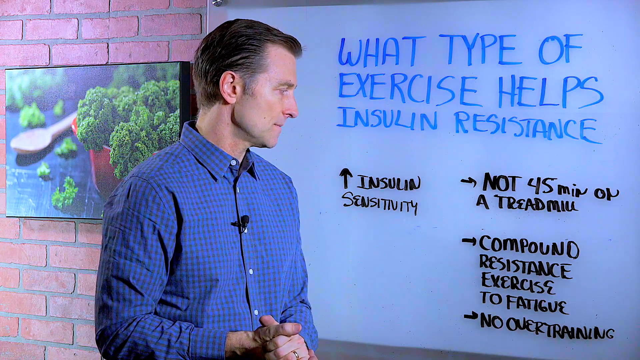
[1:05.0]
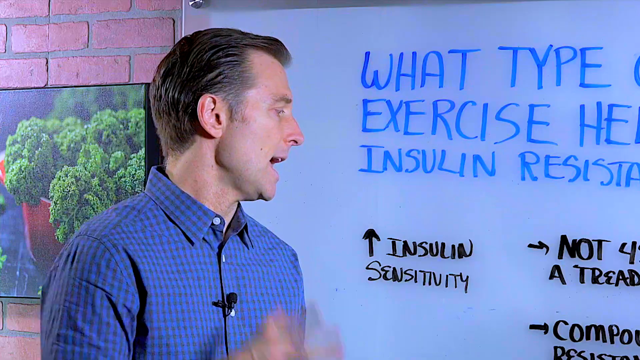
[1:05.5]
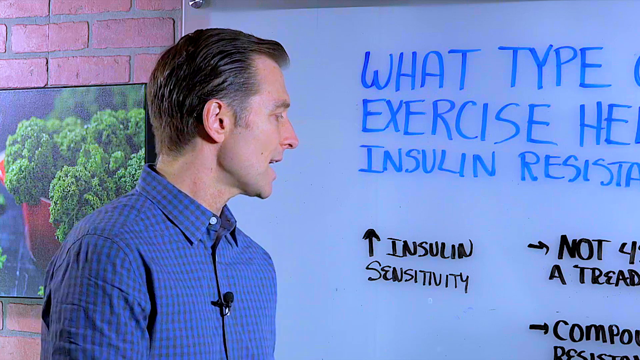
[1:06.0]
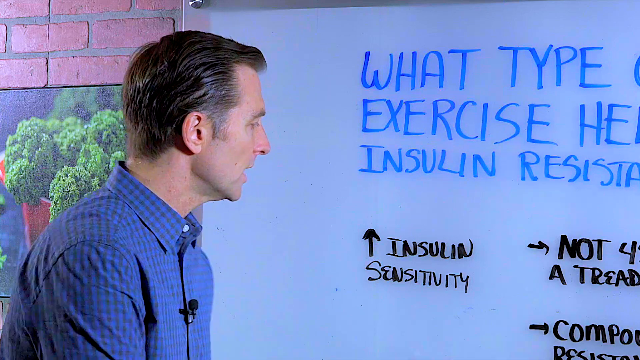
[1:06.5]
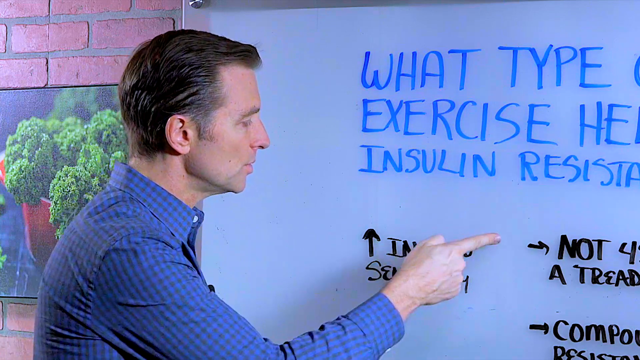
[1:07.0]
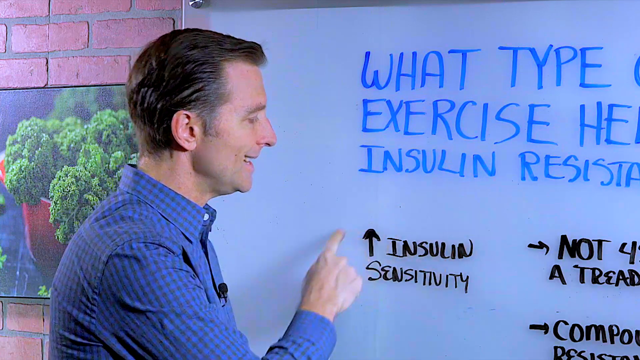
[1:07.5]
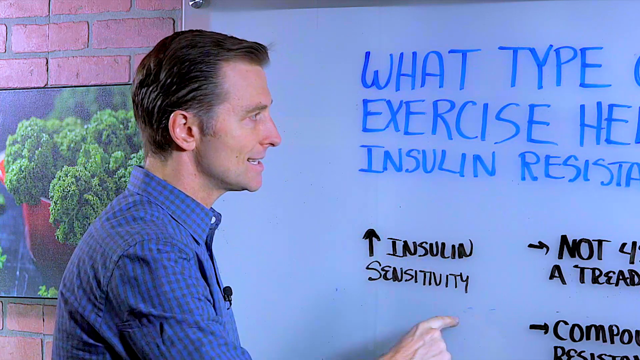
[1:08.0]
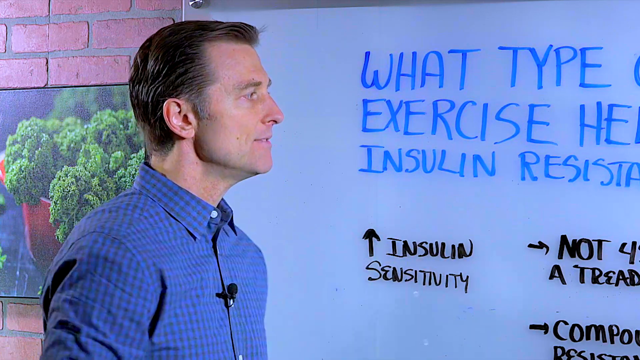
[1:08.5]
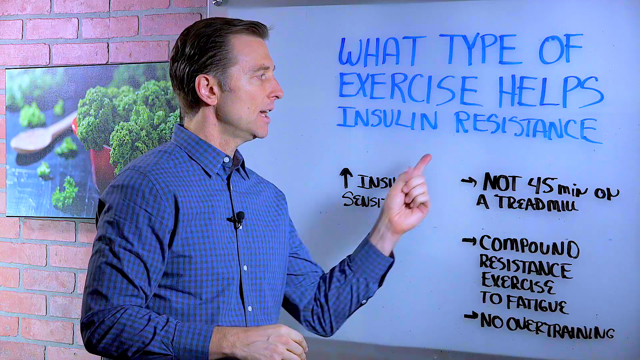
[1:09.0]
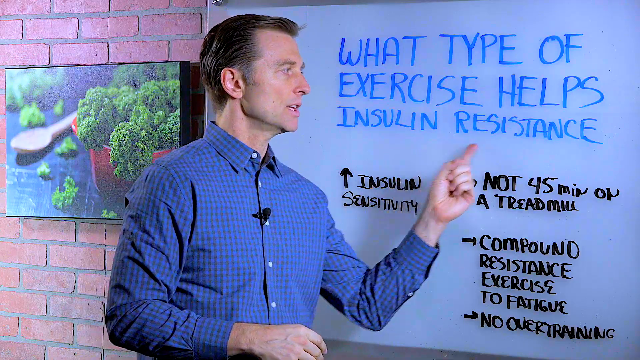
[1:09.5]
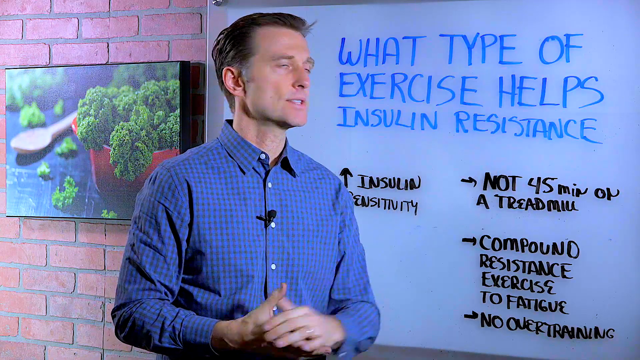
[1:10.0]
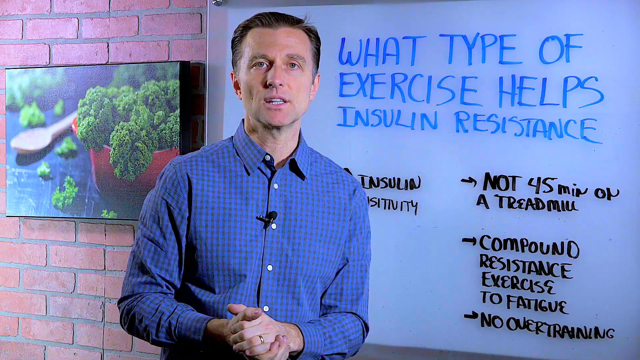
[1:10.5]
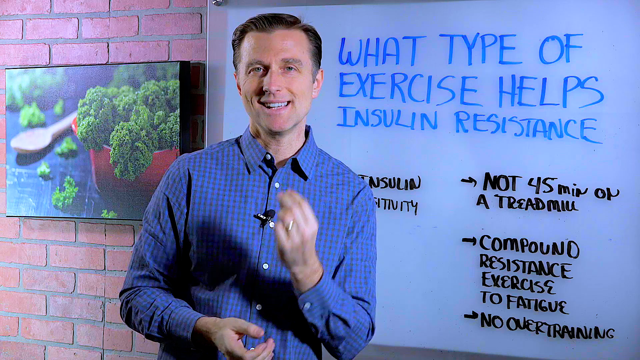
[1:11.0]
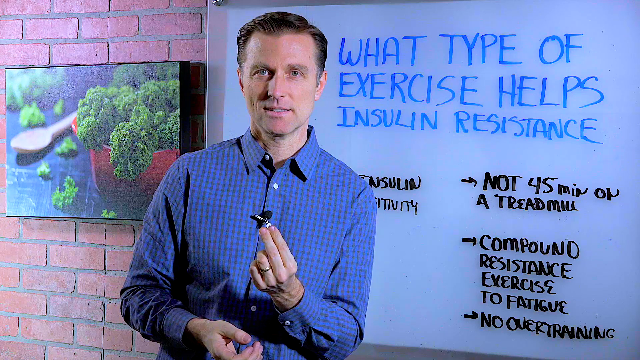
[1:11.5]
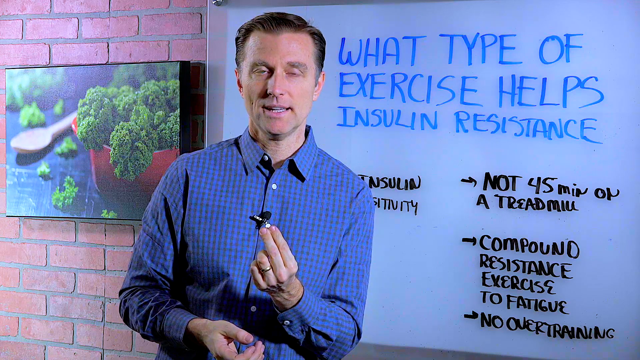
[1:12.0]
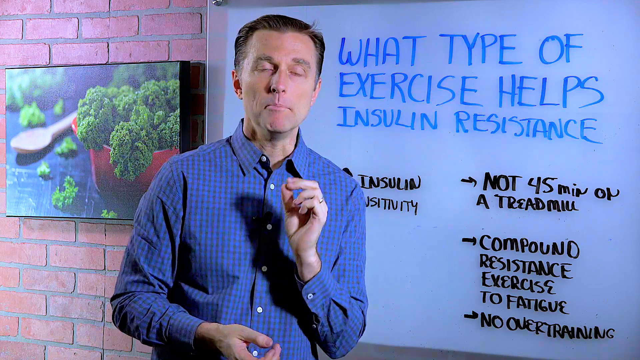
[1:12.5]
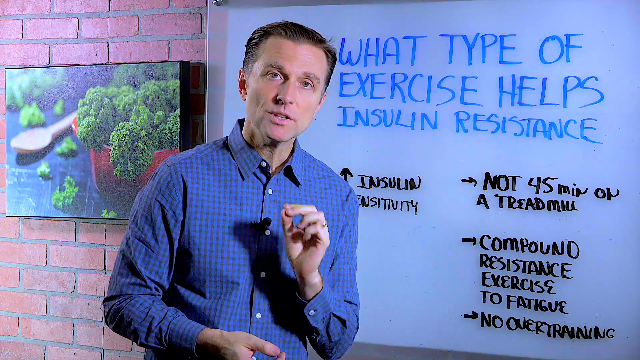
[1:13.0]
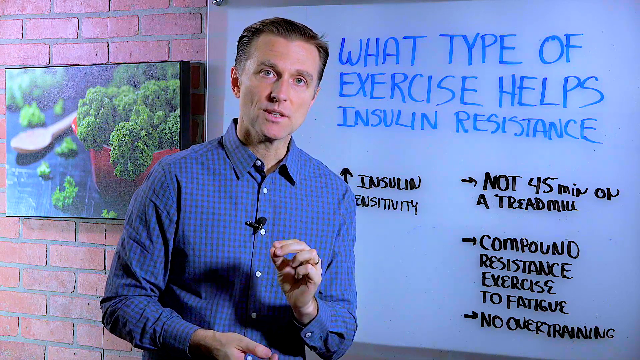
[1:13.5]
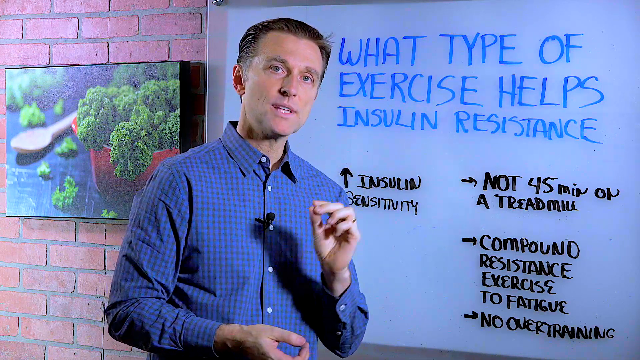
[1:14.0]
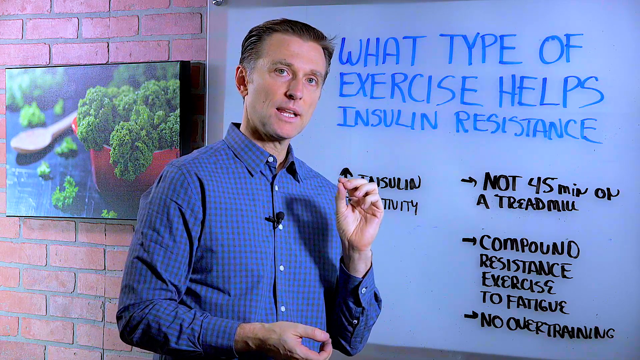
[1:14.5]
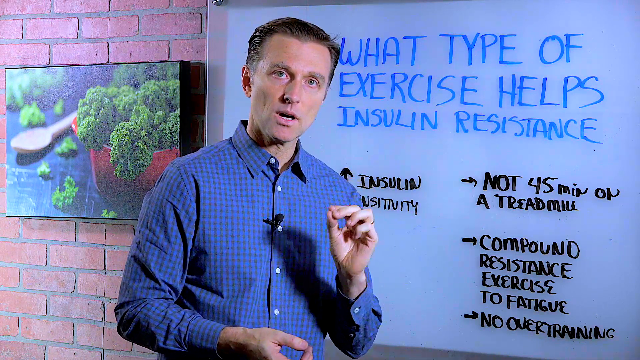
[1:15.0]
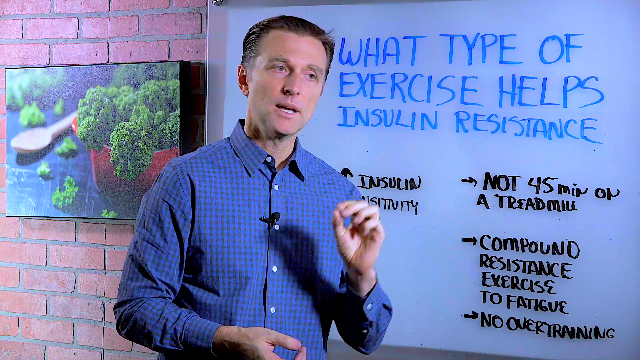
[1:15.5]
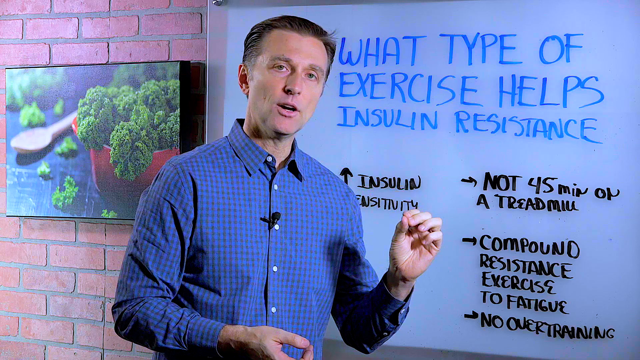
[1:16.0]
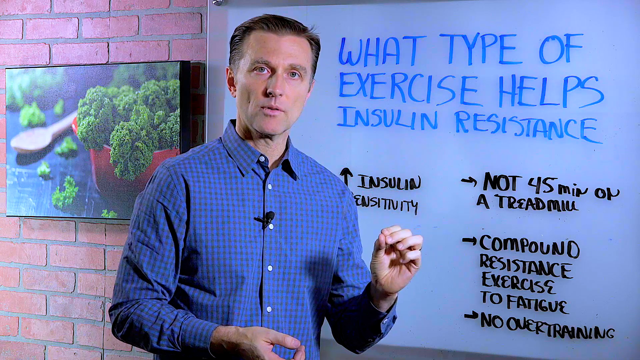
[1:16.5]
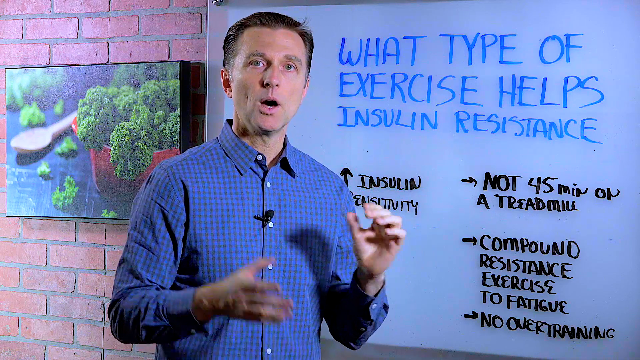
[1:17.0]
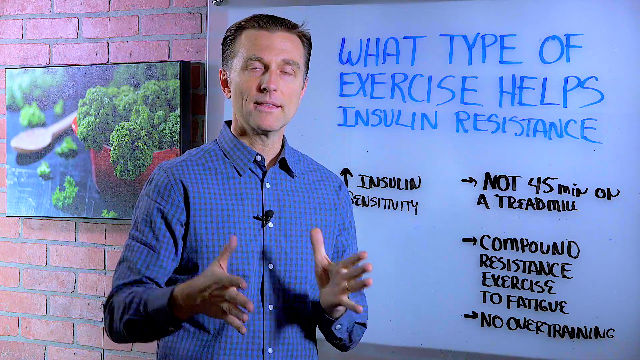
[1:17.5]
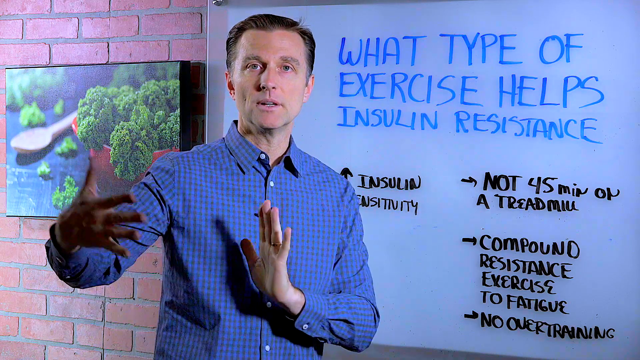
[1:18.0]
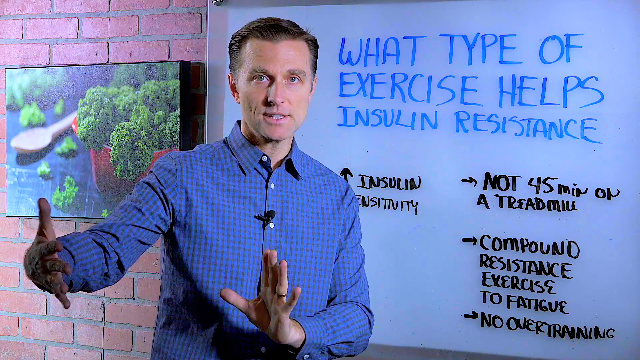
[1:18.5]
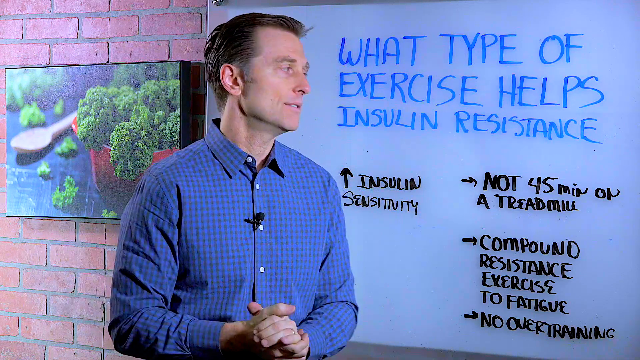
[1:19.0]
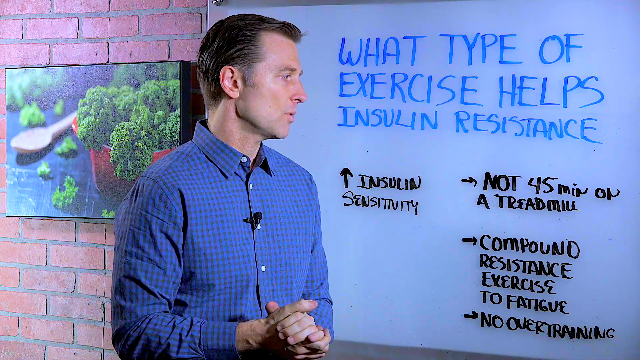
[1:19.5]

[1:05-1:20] The same man, in the blue button-up collared shirt with the microphone on his chest, uses his hands to make his point. He points to the up arrow and the words "insulin sensitivity", drawing a circle around the words with his finger on the whiteboard. The whiteboard has a title in blue and the other writing in black. He stands in front of a red brick wall with normal-colored cement or mortar between the bricks, and the black-framed picture shows a red bowl with lettuce coming out of it and kind of spread on a black table, with a wooden spoon sitting next to it.